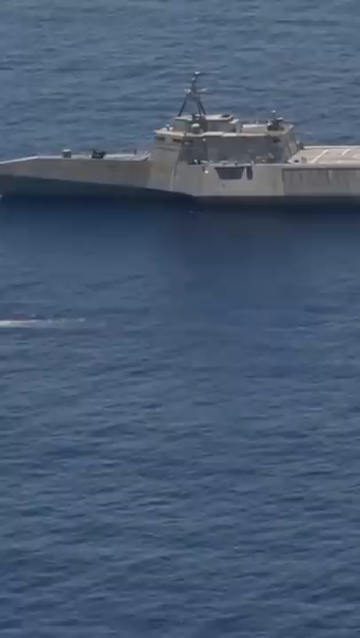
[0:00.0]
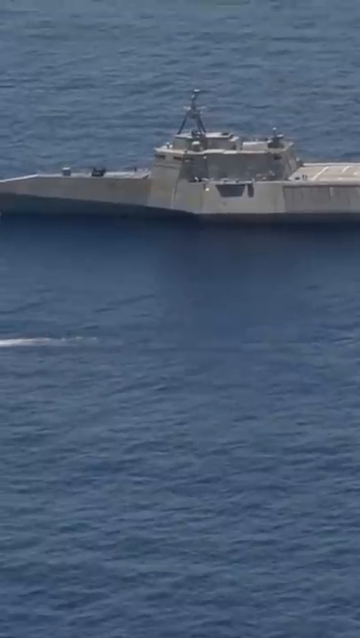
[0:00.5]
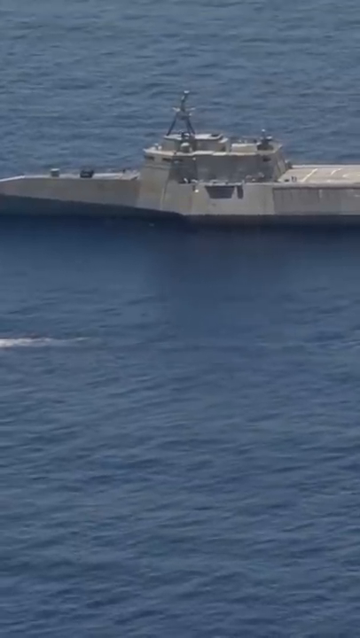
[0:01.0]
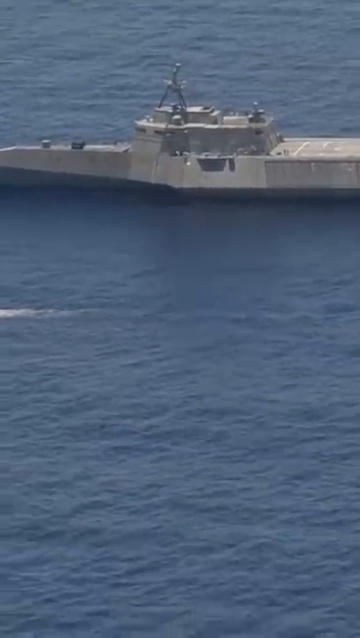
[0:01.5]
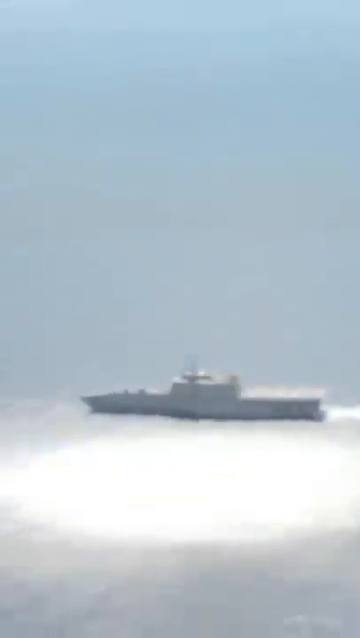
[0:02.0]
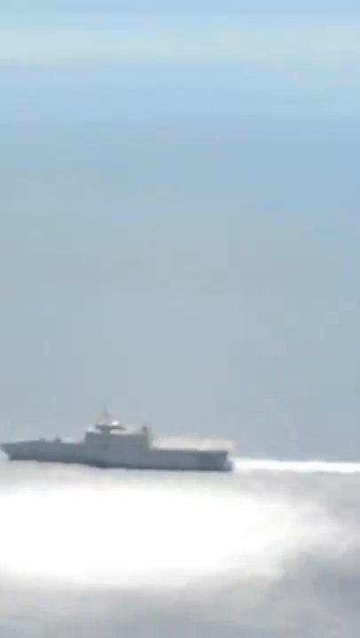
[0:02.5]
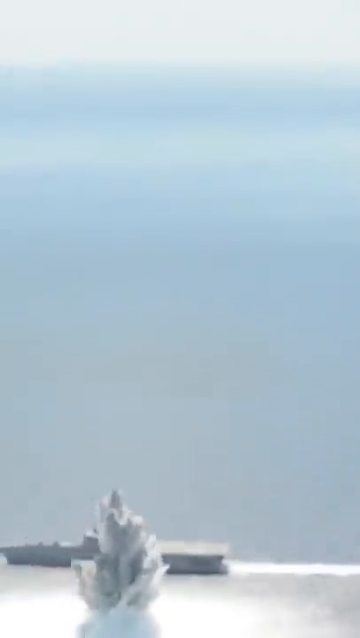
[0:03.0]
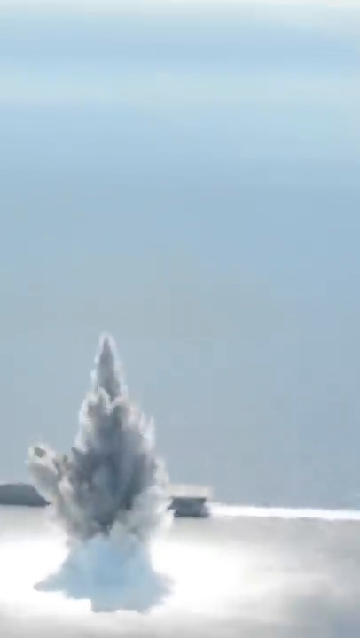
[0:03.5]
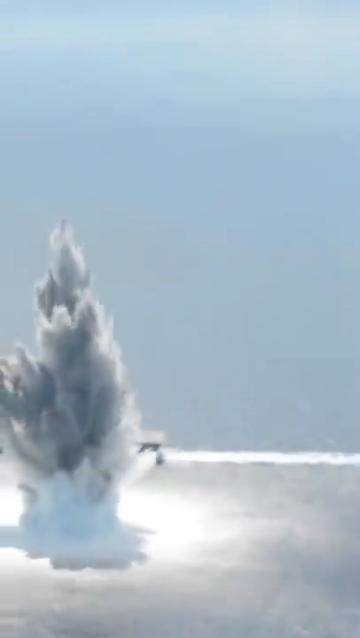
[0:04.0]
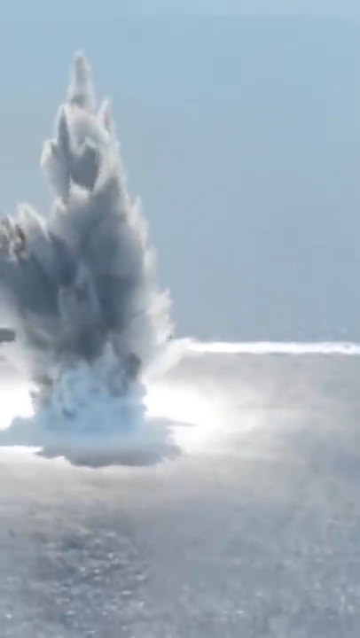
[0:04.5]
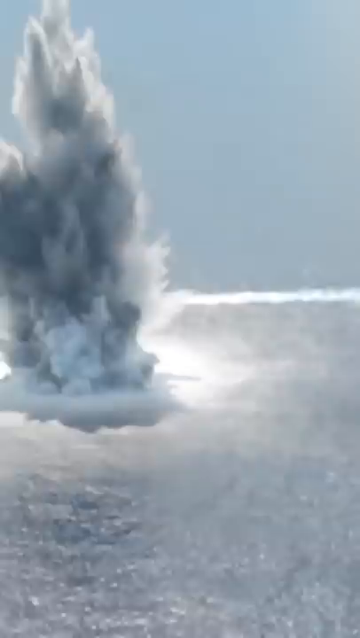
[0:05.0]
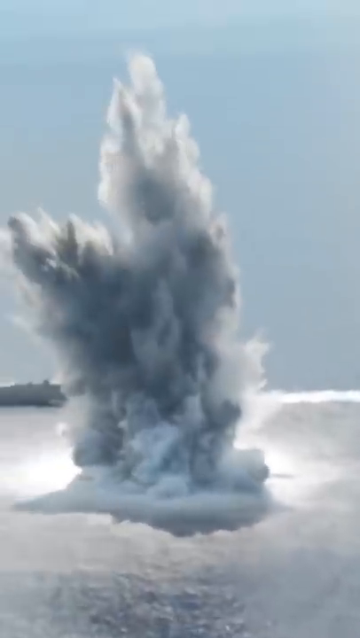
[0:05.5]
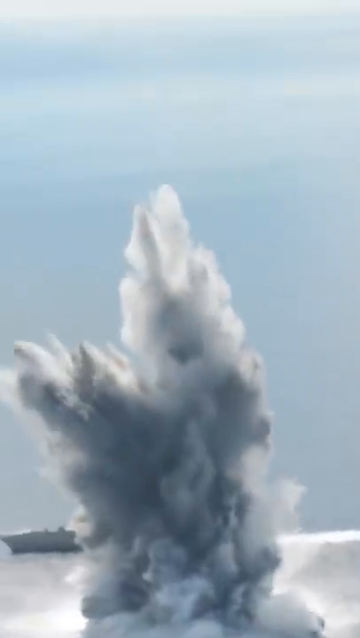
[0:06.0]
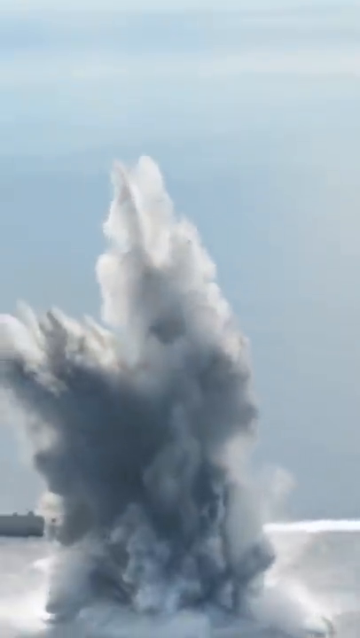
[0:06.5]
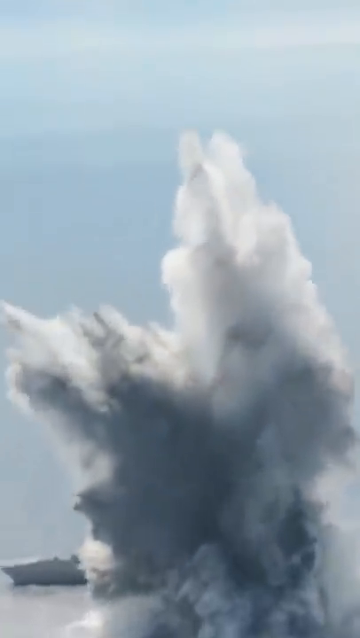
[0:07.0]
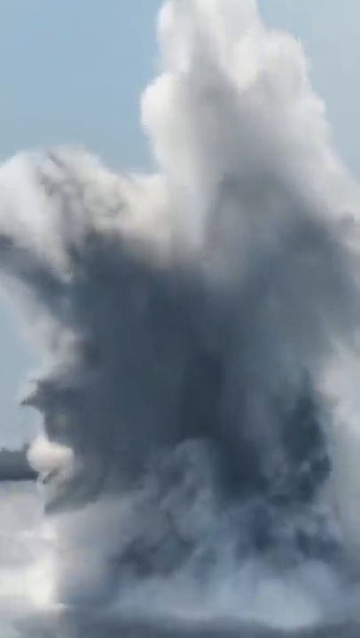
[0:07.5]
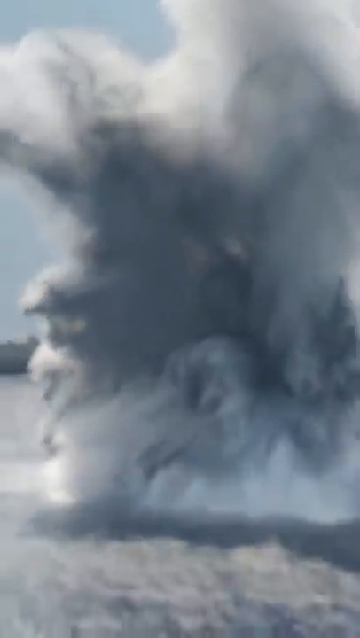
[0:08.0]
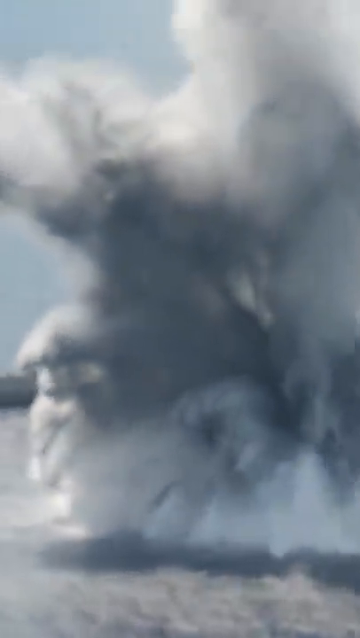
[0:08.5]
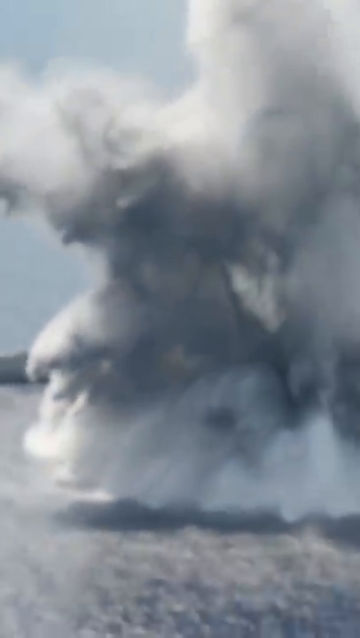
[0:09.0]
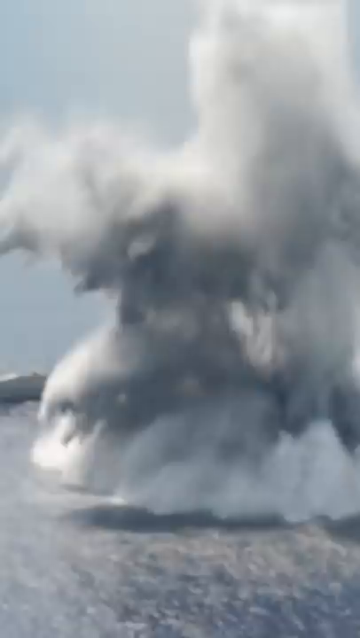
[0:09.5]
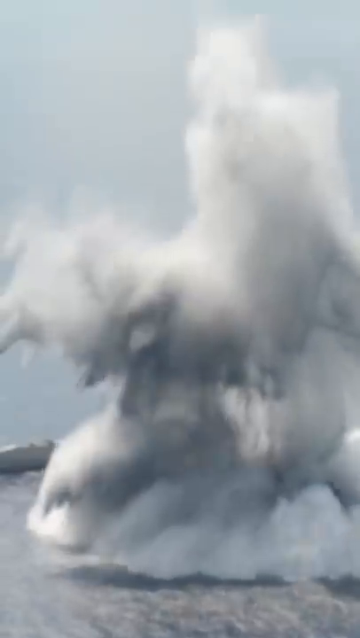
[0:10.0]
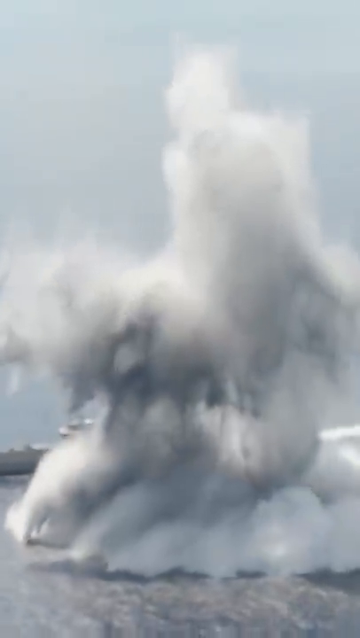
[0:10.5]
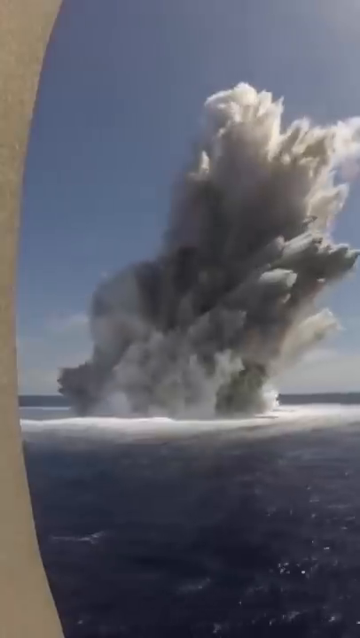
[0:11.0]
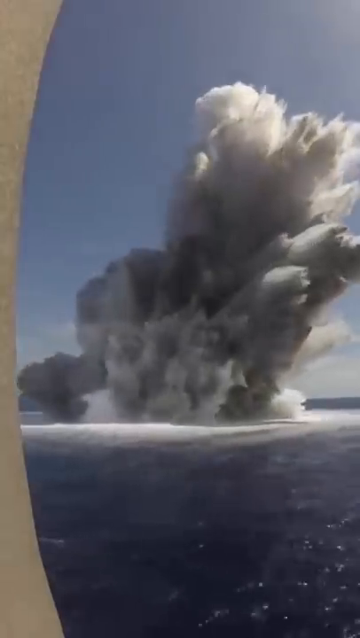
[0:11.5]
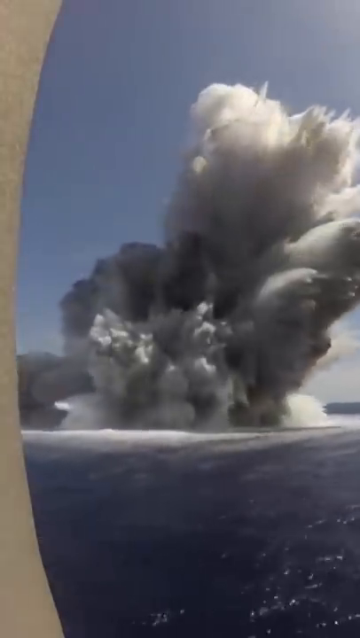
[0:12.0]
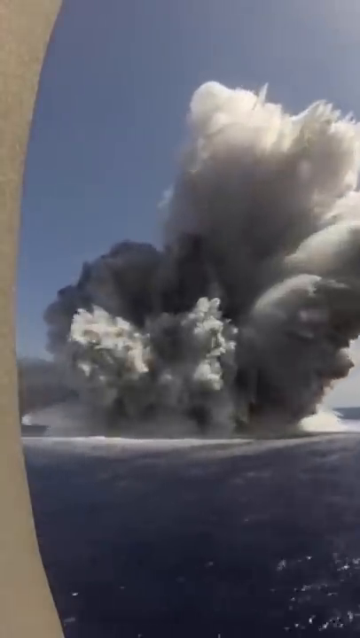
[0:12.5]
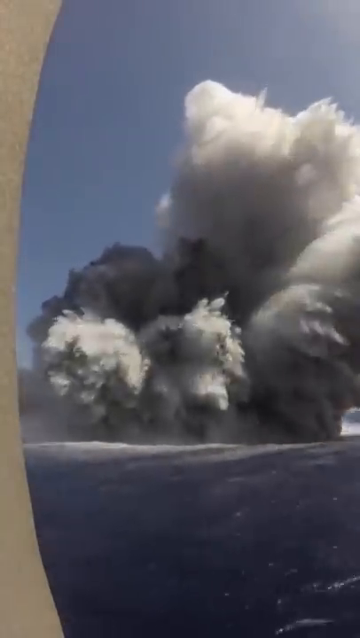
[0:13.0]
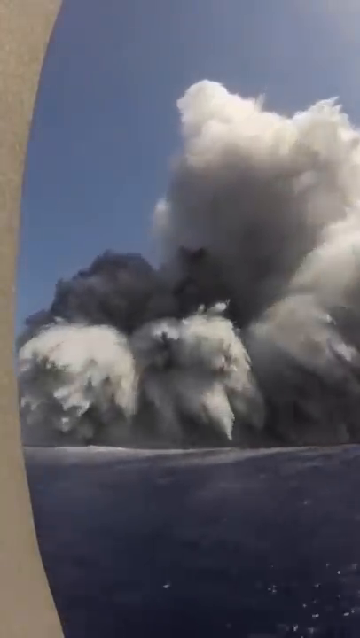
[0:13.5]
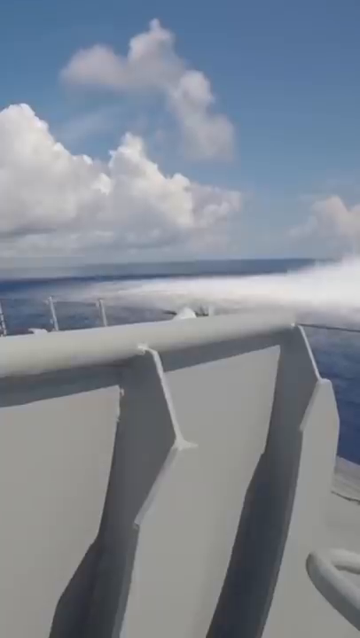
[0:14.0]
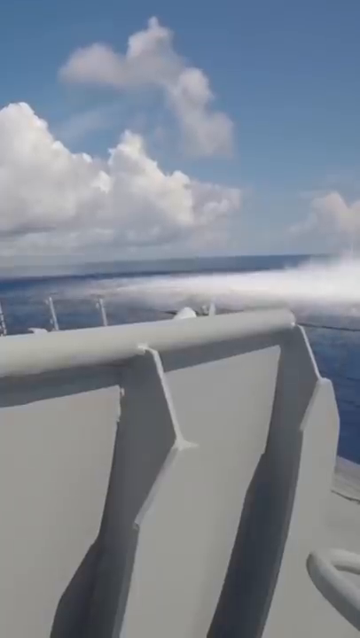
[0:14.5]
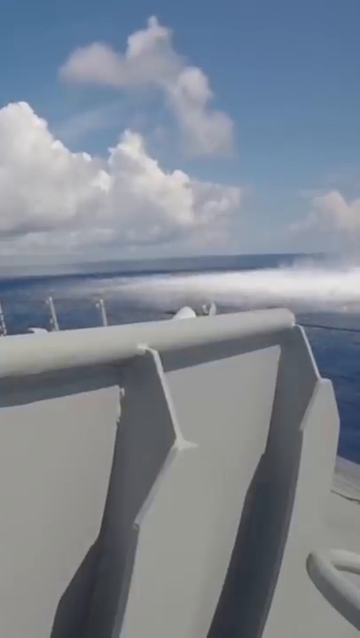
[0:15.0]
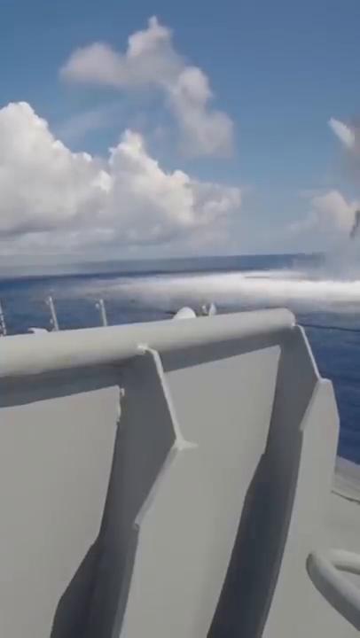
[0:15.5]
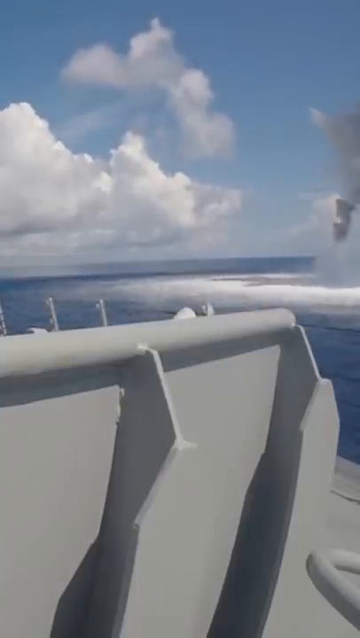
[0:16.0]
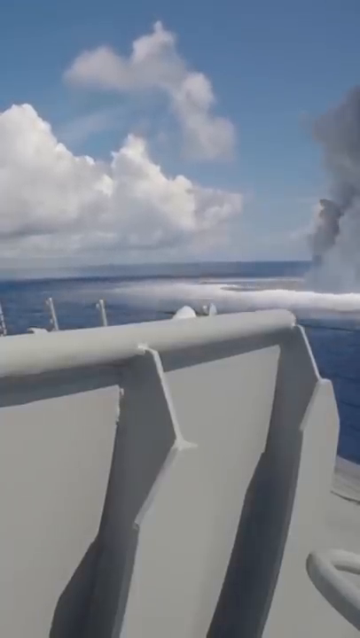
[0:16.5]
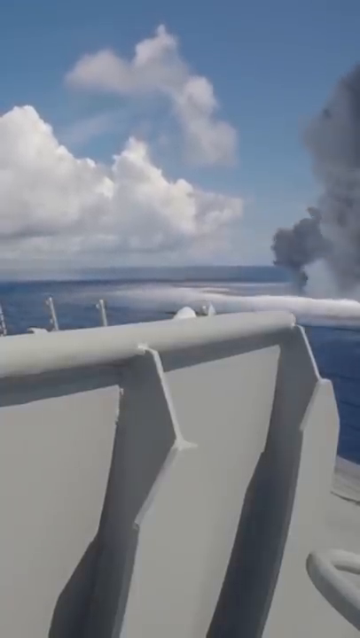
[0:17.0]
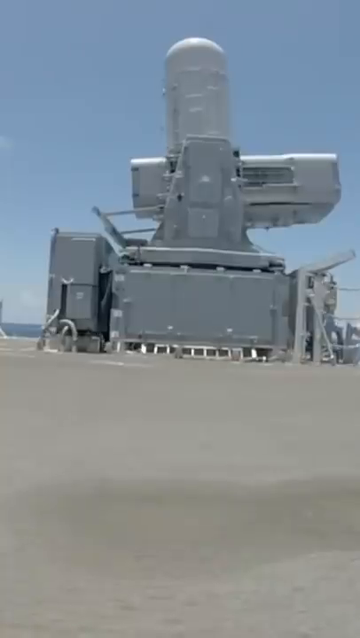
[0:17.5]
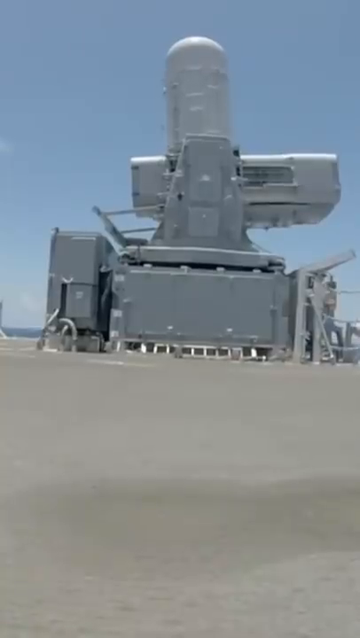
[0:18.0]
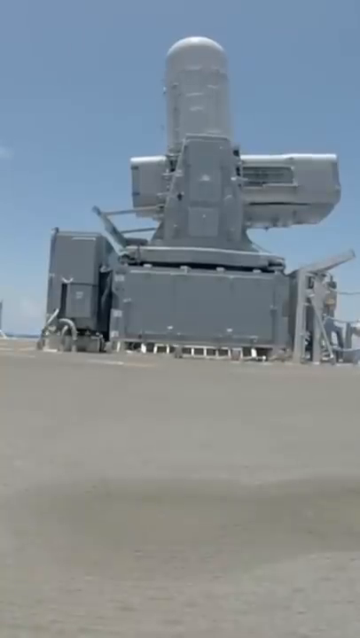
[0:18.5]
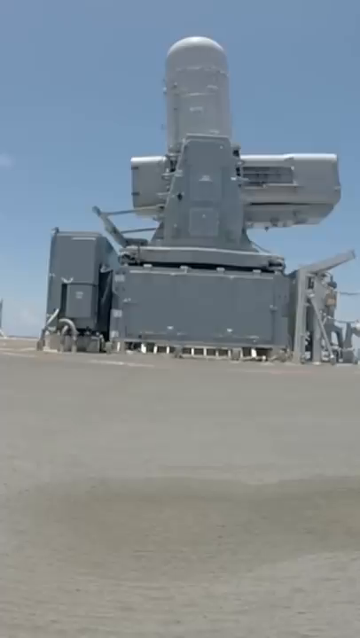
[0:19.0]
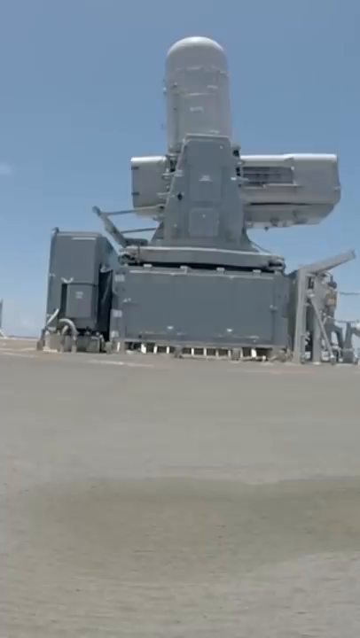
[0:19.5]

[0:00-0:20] A military ship is out on the open ocean, and its crew appears to be detonating explosives underwater while filming and measuring them. The ship has all sorts of electronic radar and other equipment built into it, and it sails very close to the underwater explosion. A camera on board shows the surface of the ship with the explosion in the background. The water at first is a bright, deep blue. The explosion set off under the water creates a large white spot on the surface, and then the water bursts up from the surface into huge sprays. The ship appears to be monitoring many different aspects of the explosion. It is a very odd-looking ship; its bow and stern look like they do not match. Among the equipment on top of the ship is a round ball used for radar or sonar.